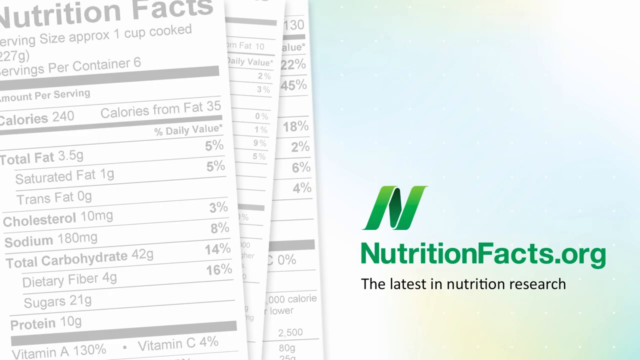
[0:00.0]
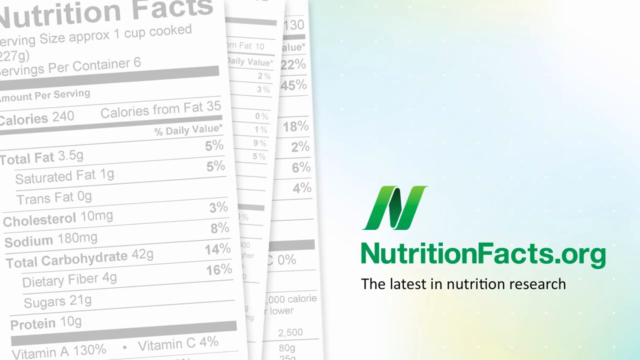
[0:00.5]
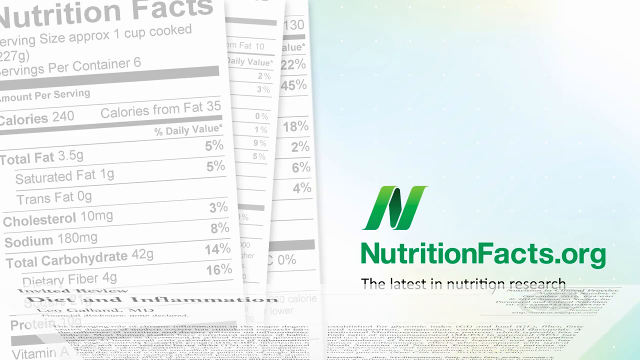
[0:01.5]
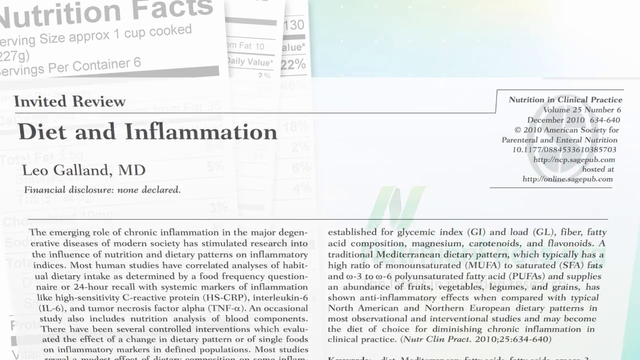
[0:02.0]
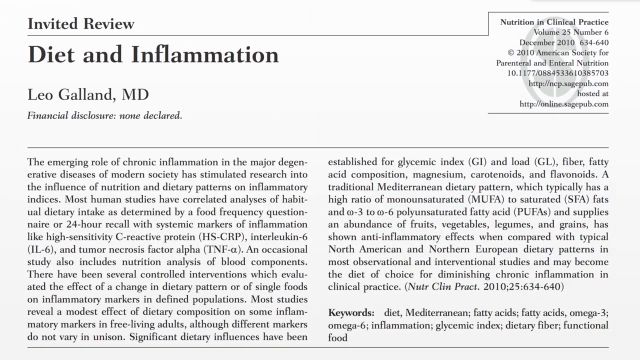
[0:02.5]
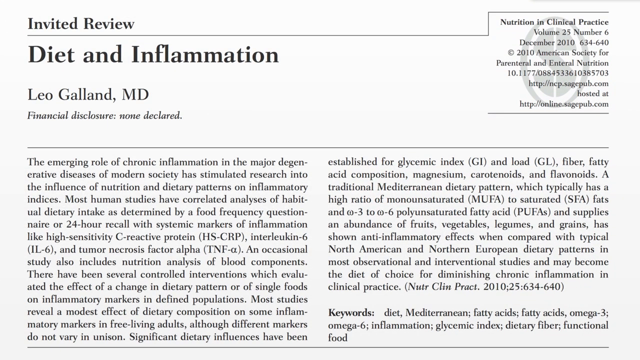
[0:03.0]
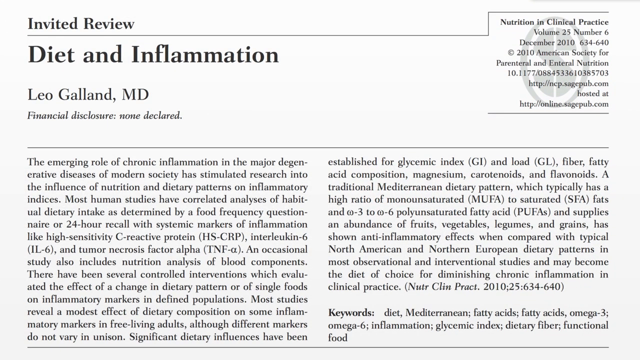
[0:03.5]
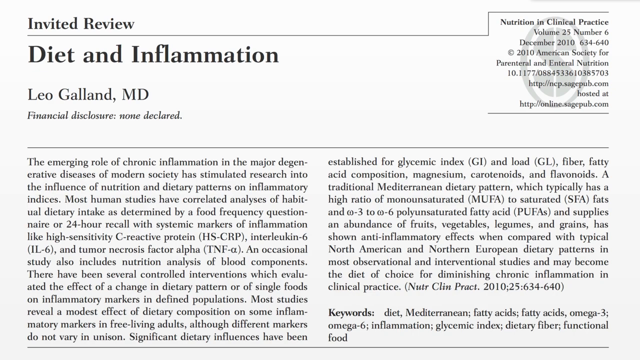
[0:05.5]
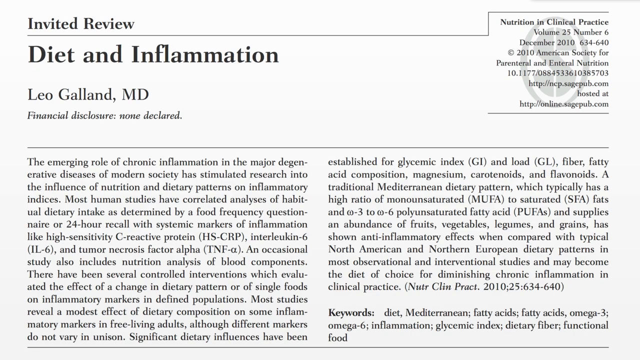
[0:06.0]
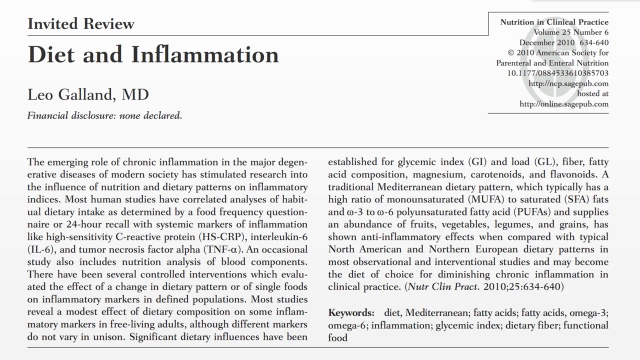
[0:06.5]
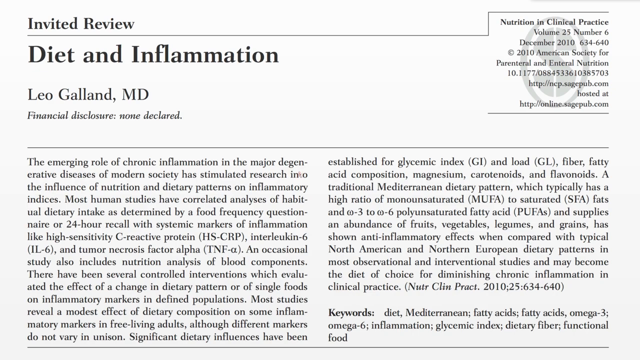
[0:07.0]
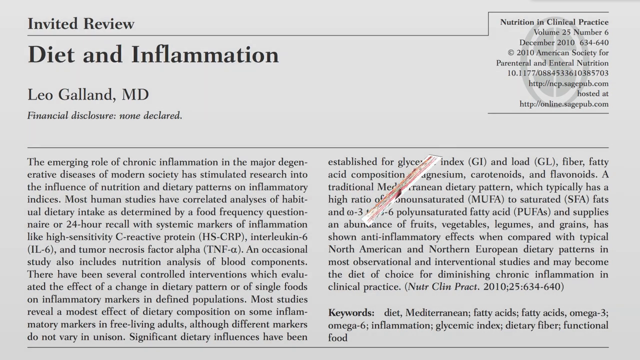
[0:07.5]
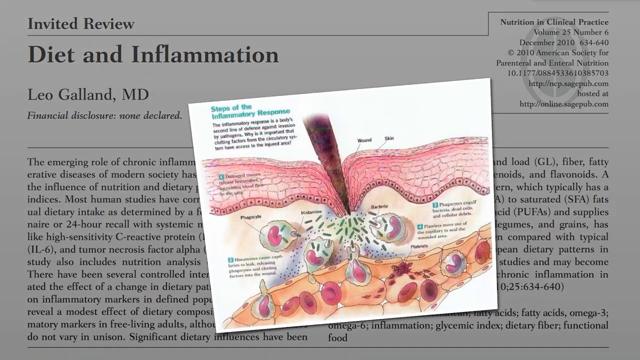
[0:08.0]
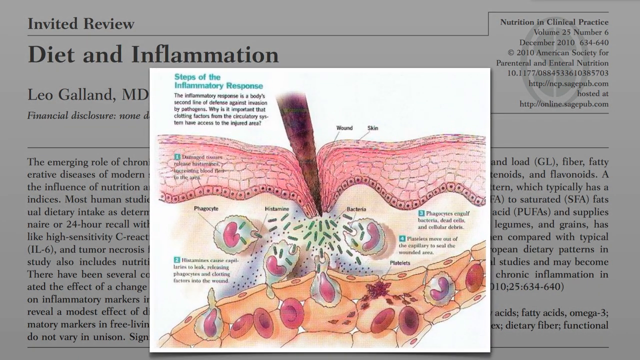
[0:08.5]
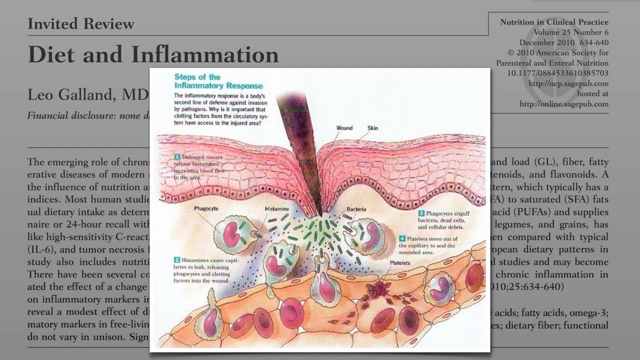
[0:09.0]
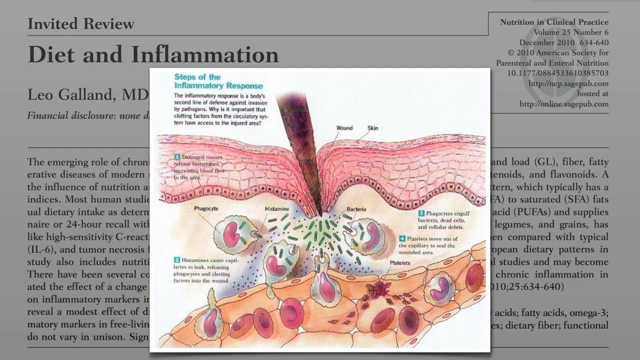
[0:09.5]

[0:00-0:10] The video opens with the nutritionfacts.org logo, a slanted green N. It then cuts to a document from Leo Galland MD titled "diet inflammation", with two paragraphs visible on the screen; it is from Nutrition and Clinical Practice, volume 25, number 6, from the American Society for Parenteral and Enteral Nutrition. Another screenshot then pops out: a medical sketch of the steps of the inflammatory response, with text describing what happens; it apparently states that the inflammatory response is the body's second line of defense against invasion by pathogens. In the sketch, the skin is broken through by something sharp, possibly a nail, and the break is labeled "wound". There are about four steps detailing how the body deals with foreign pathogens.